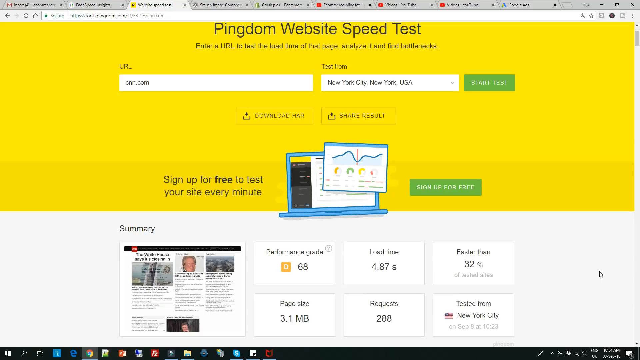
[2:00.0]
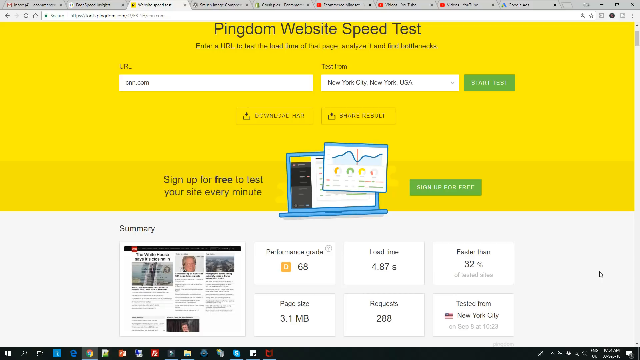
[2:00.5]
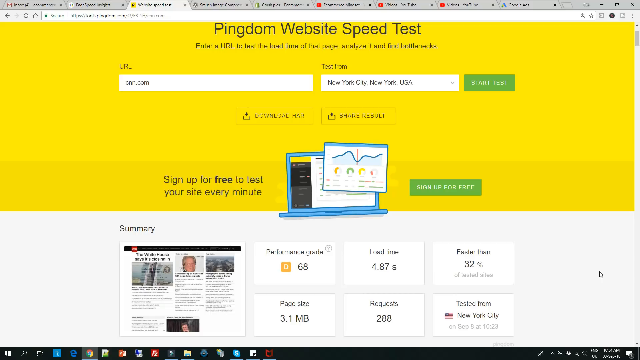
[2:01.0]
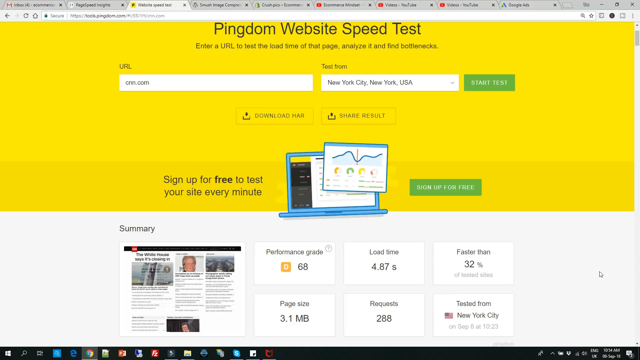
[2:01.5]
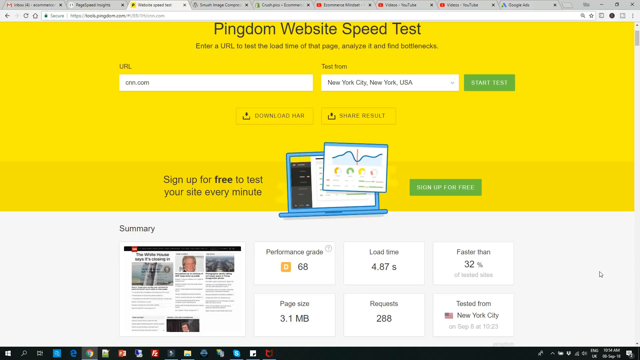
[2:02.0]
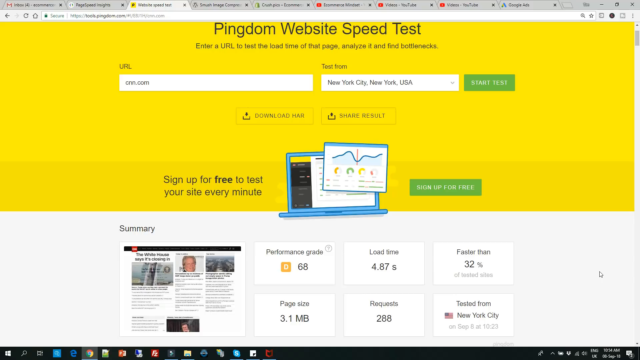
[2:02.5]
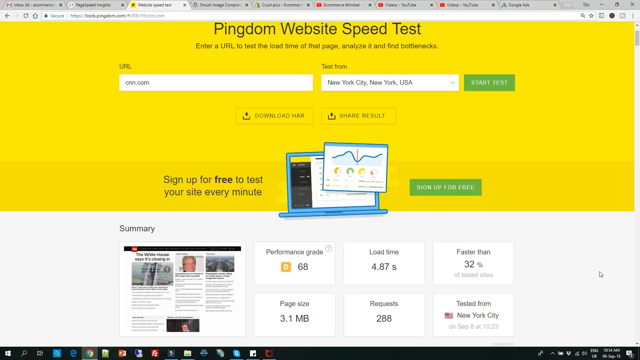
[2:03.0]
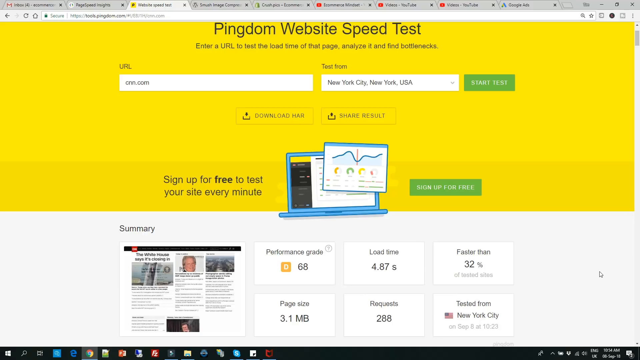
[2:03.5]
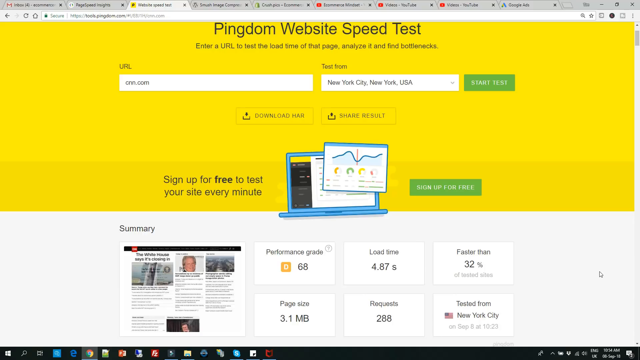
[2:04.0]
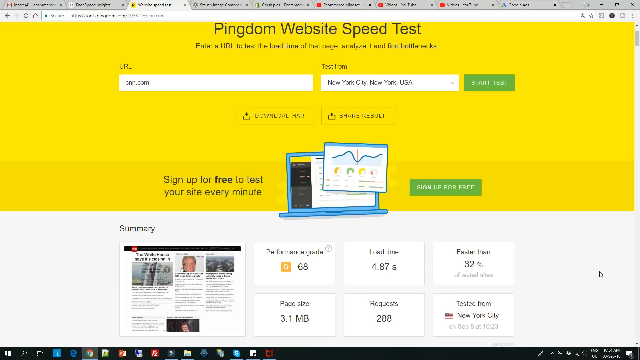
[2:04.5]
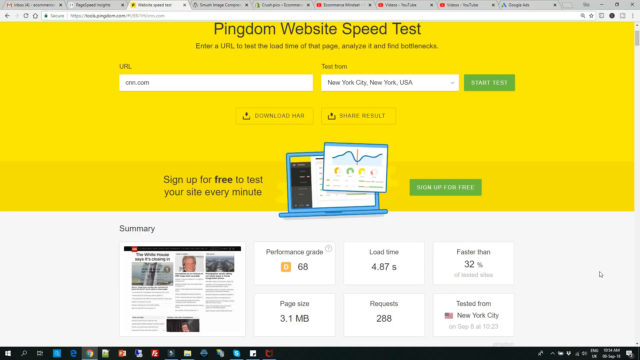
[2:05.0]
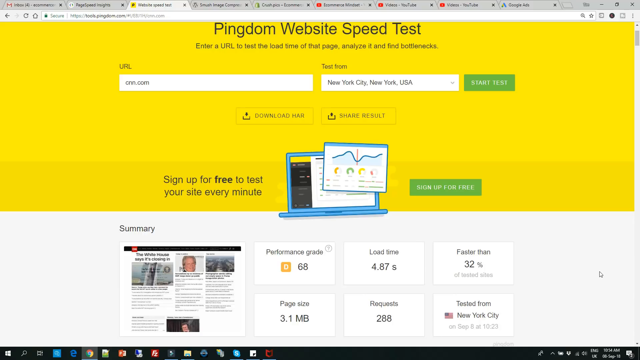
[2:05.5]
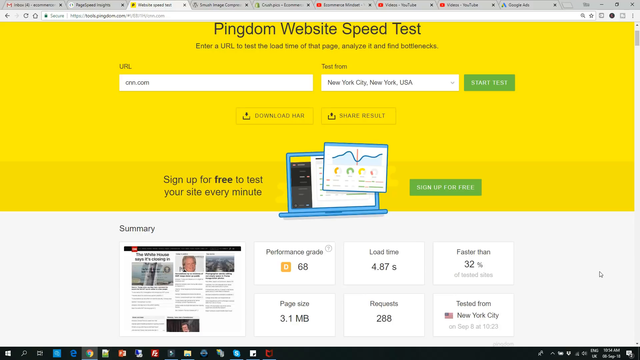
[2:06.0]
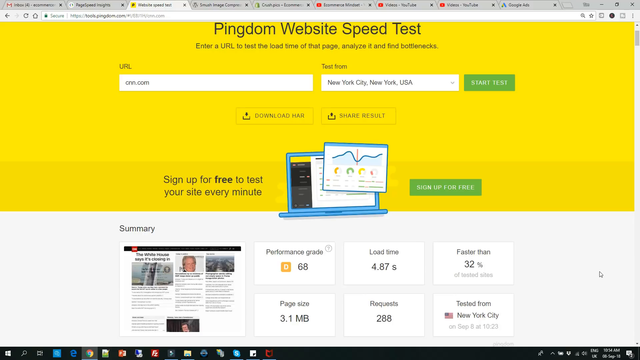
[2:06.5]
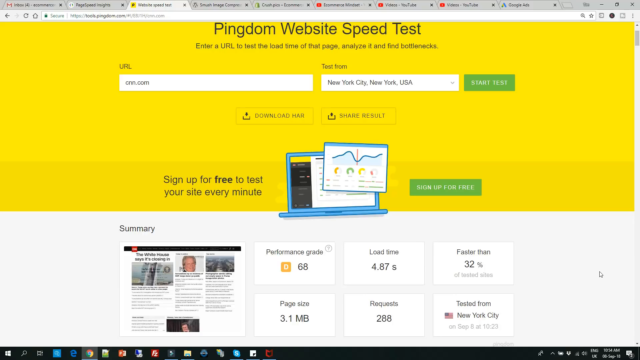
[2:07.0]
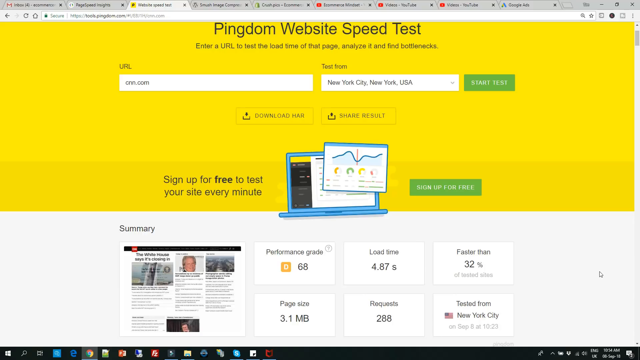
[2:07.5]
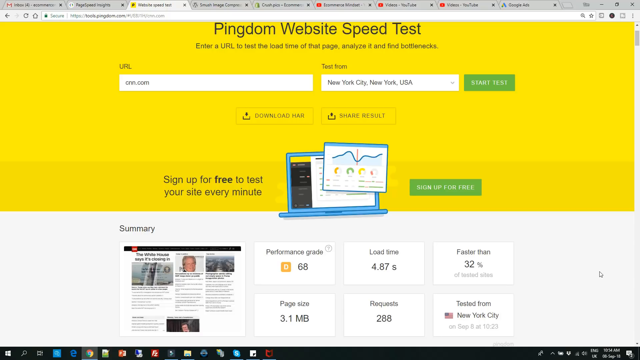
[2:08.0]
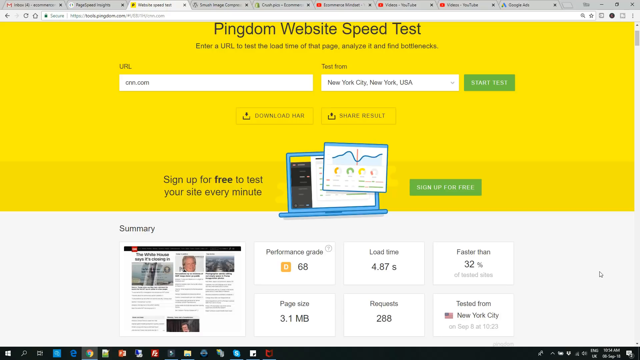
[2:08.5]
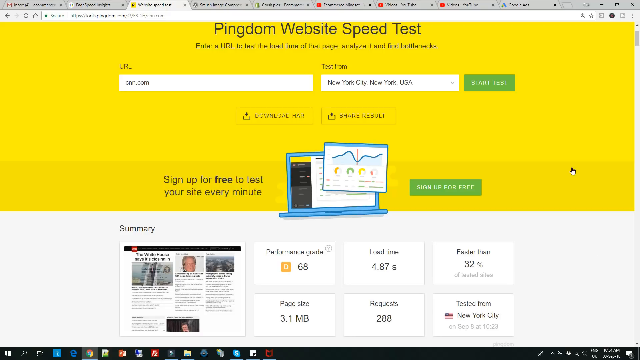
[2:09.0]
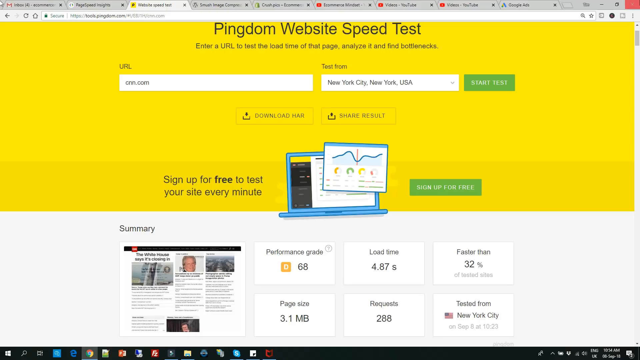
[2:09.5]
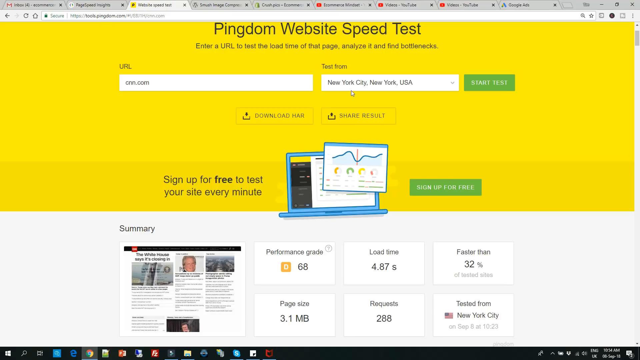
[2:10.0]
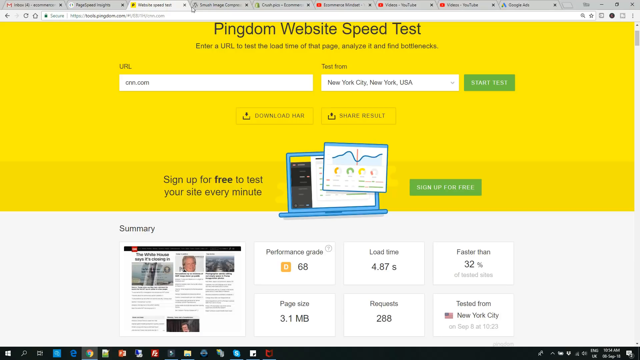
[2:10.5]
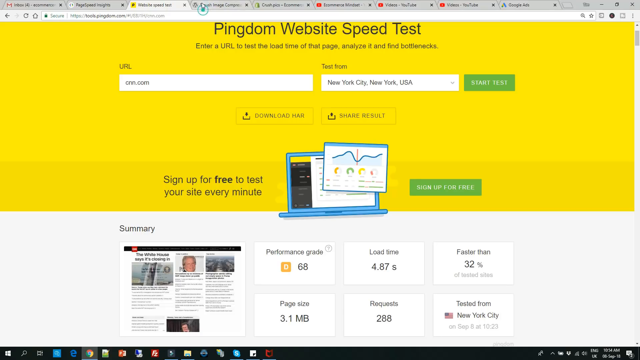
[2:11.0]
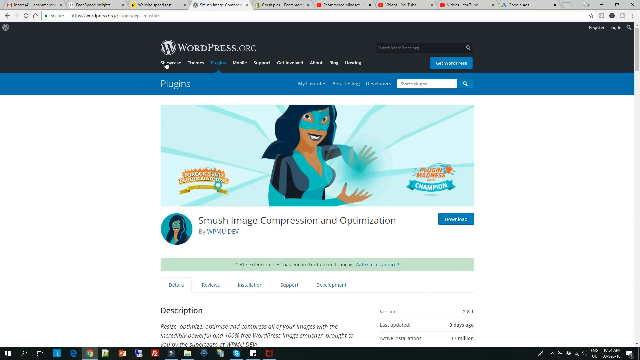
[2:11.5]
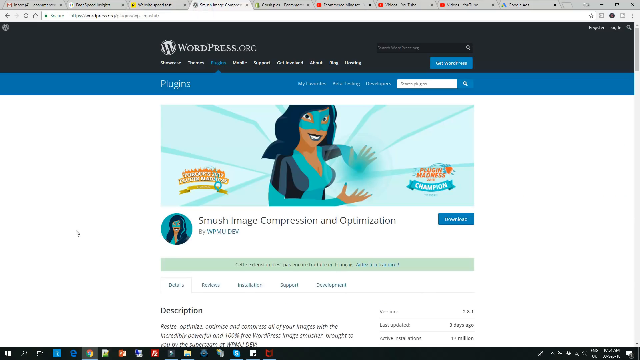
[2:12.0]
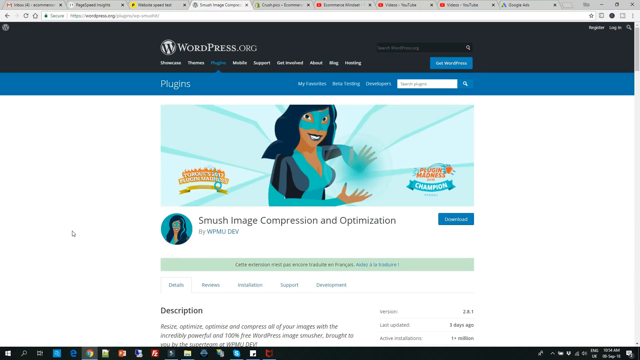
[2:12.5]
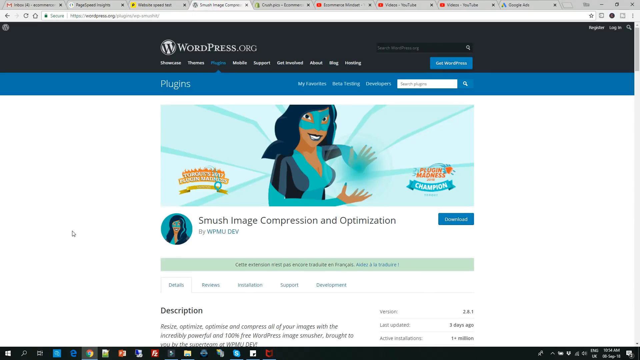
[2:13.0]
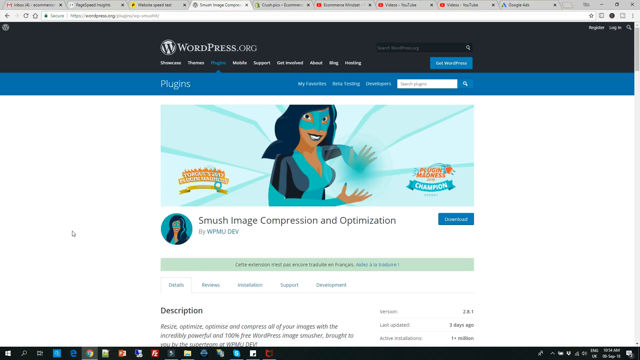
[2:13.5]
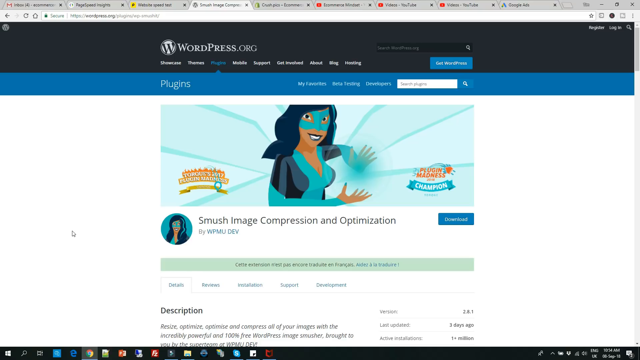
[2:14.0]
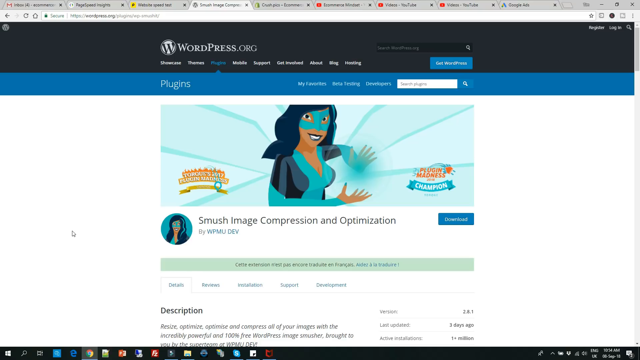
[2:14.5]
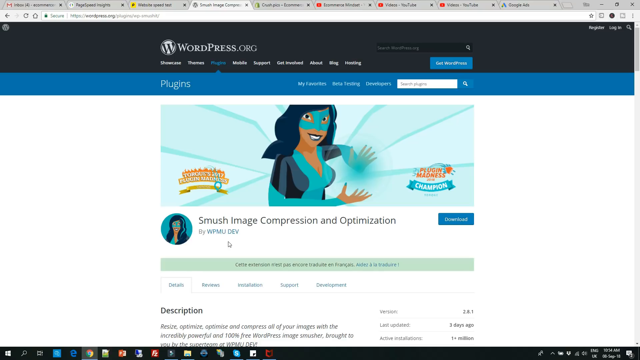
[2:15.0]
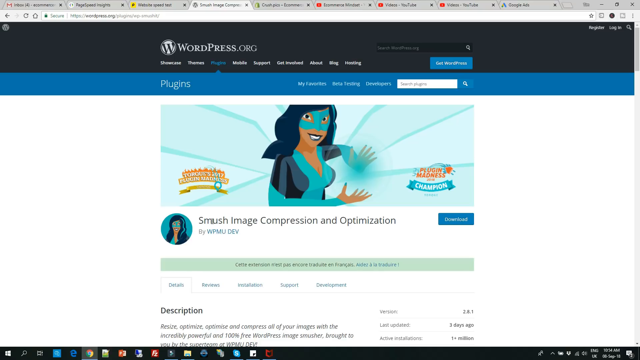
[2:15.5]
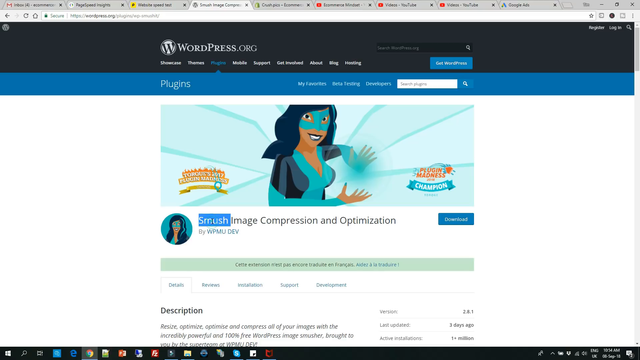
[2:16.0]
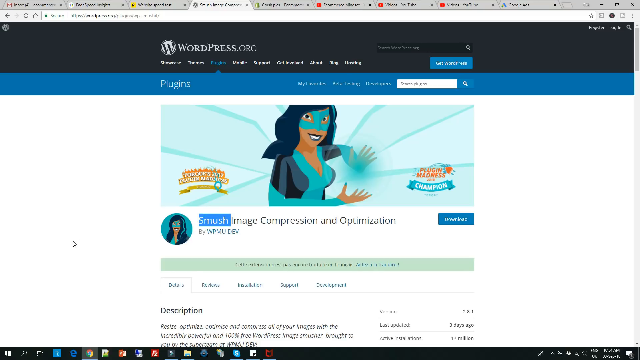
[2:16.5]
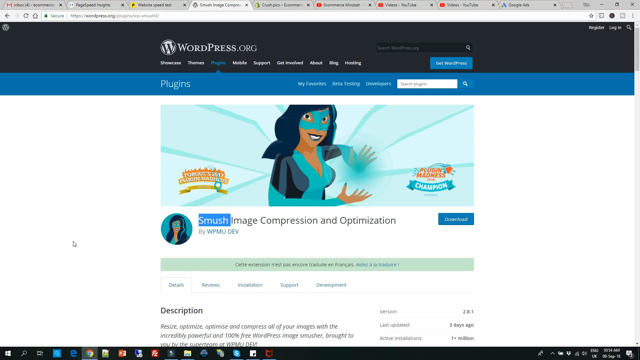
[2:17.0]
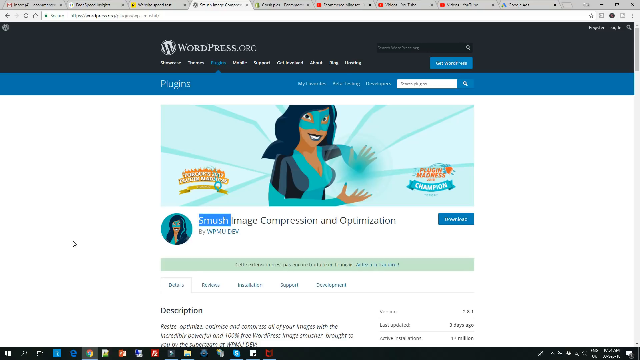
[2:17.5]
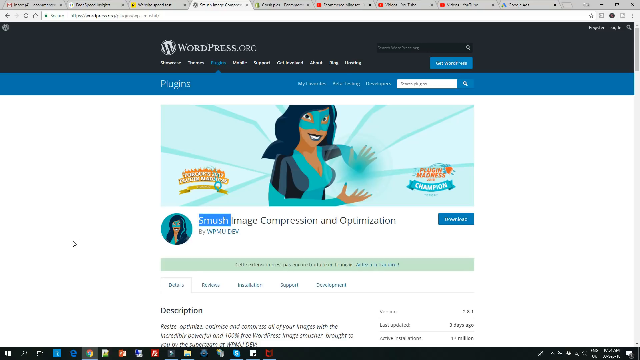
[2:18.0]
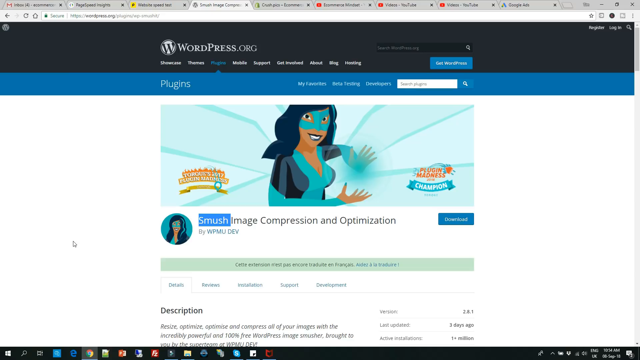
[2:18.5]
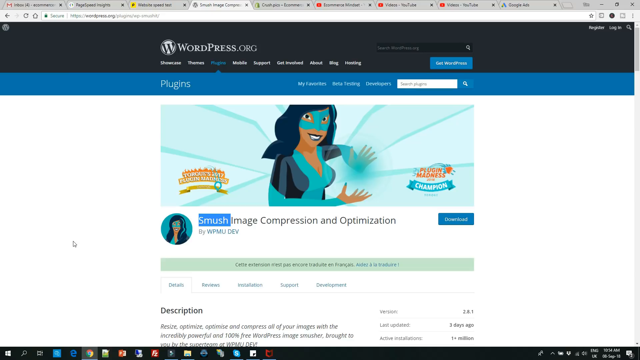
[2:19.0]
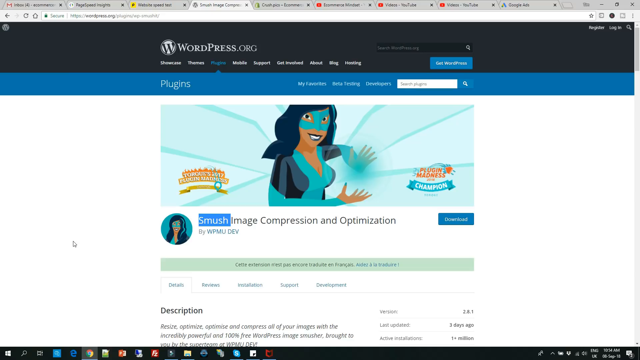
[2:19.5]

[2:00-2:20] The Pingdom website speed test page is open, with multiple tabs open on the desktop. The URL field shows cnn.com, tested from New York City, New York, United States. The page reads "Pingdom website speed test", "enter URL to test the load time of that page, analyze it and find bottlenecks". The performance grade is 68, and the site is 32% faster than other sites. The view then switches to another tab, WordPress.org, with the title "Smush Image Compression and Optimization" and something related to plug-ins.